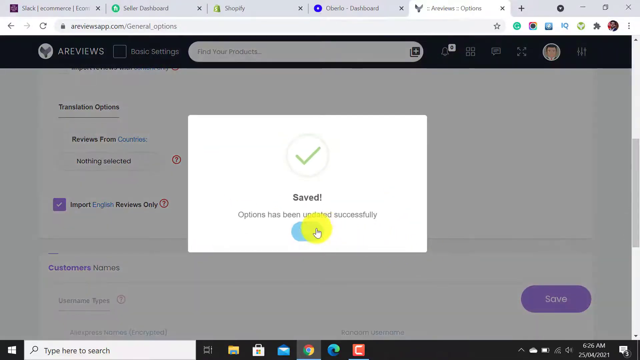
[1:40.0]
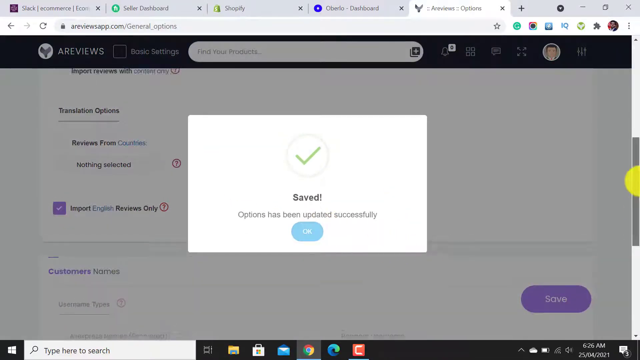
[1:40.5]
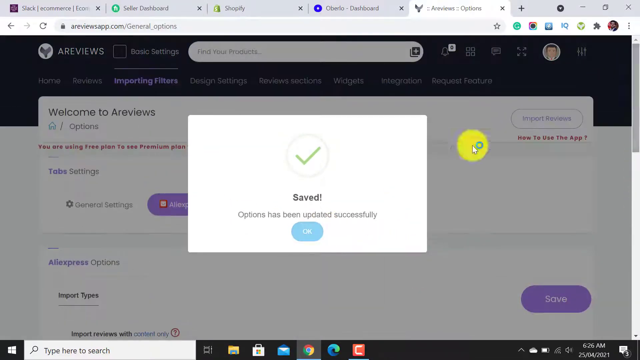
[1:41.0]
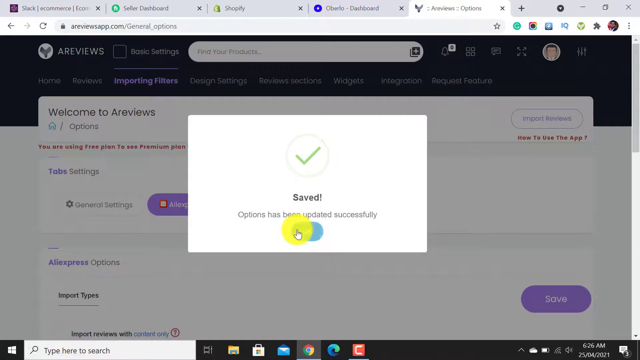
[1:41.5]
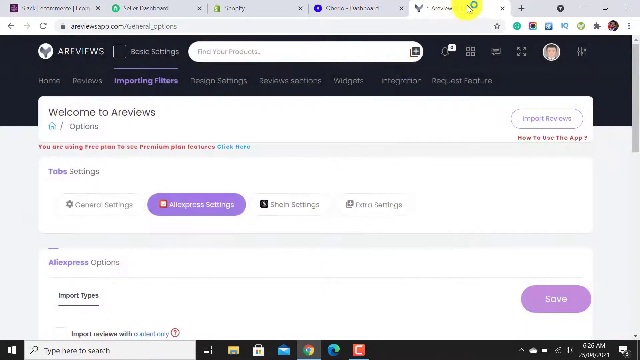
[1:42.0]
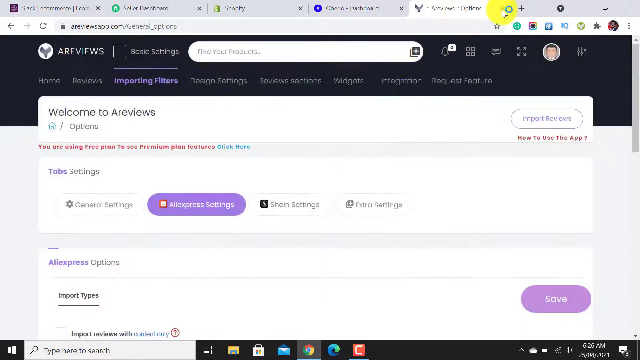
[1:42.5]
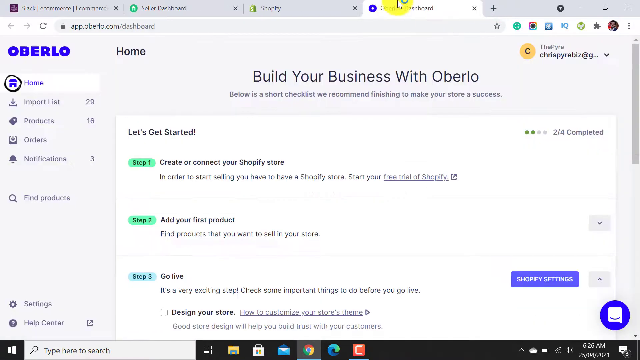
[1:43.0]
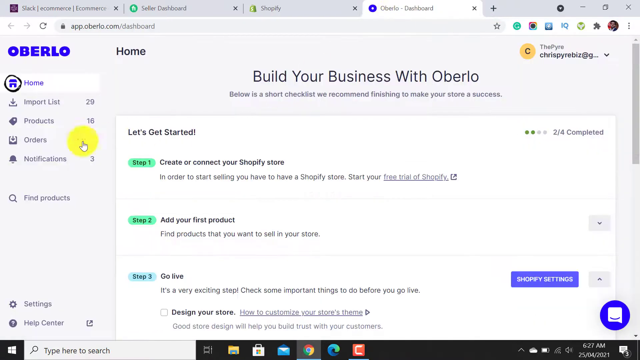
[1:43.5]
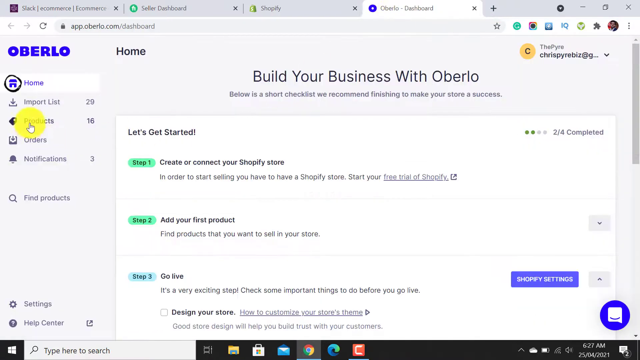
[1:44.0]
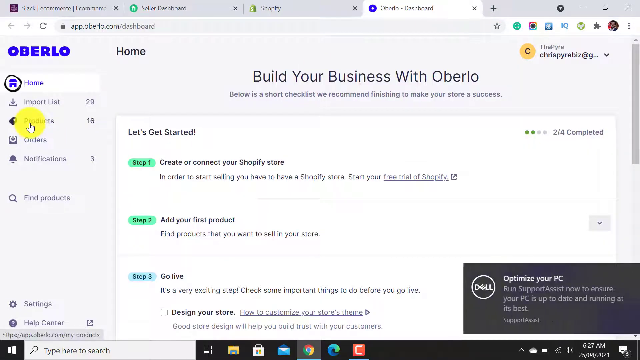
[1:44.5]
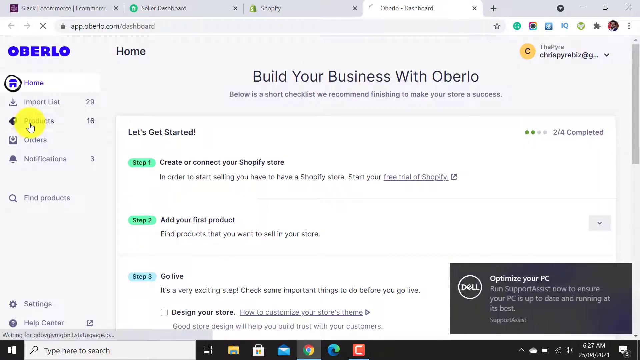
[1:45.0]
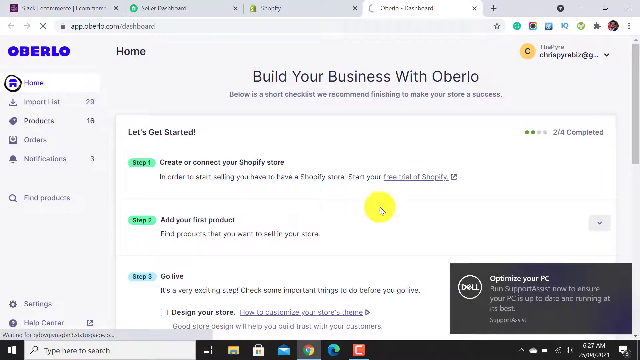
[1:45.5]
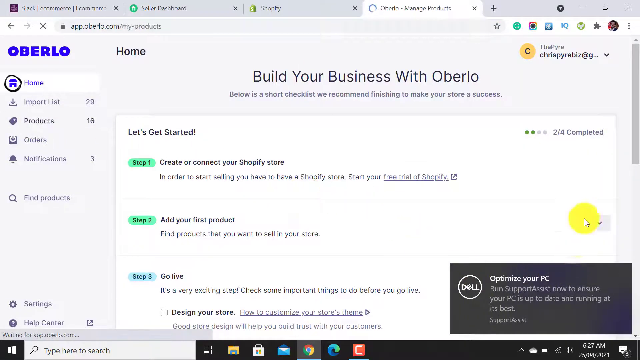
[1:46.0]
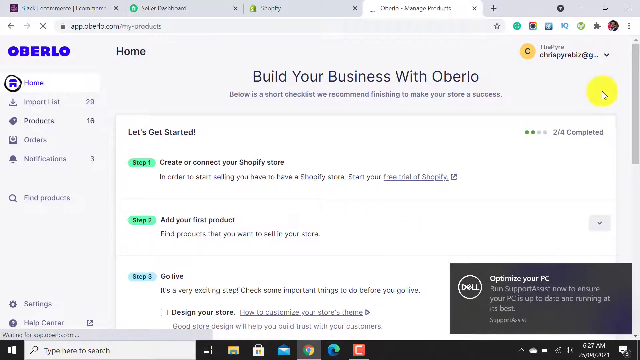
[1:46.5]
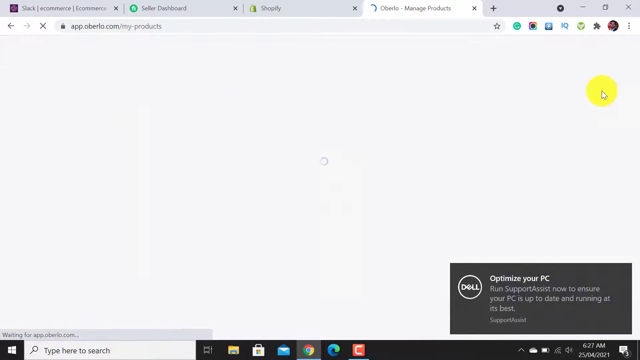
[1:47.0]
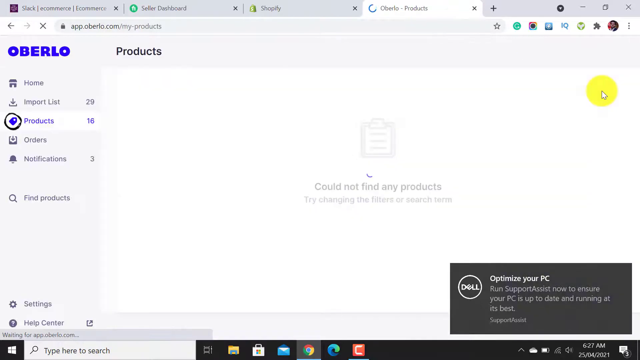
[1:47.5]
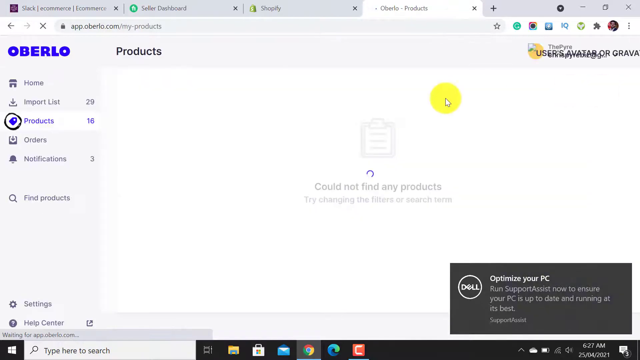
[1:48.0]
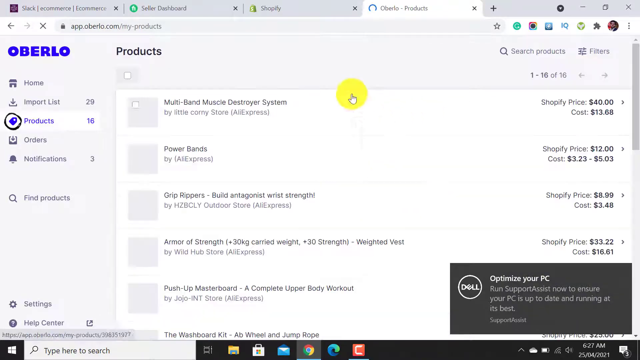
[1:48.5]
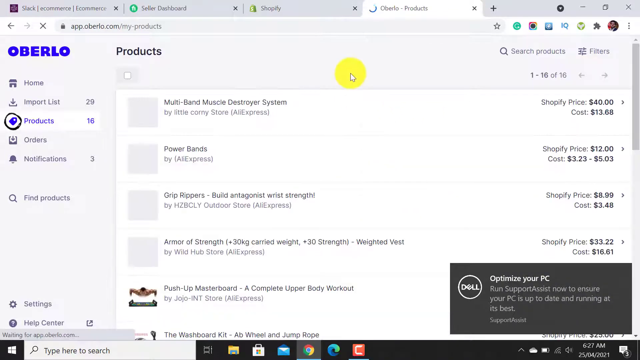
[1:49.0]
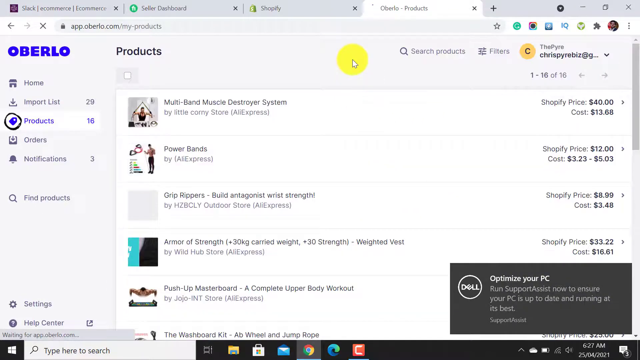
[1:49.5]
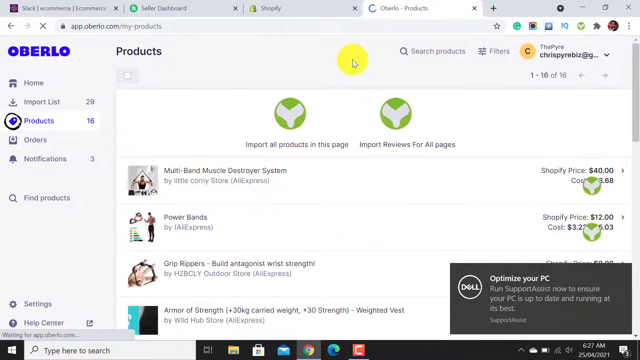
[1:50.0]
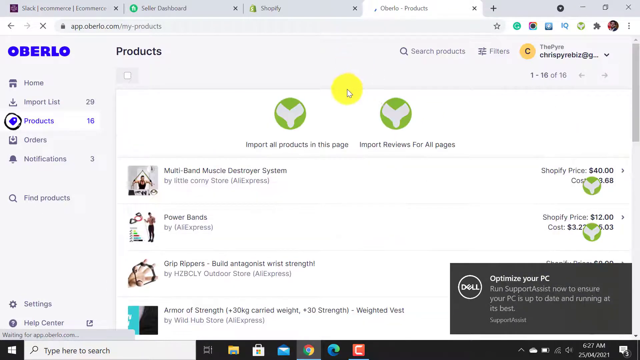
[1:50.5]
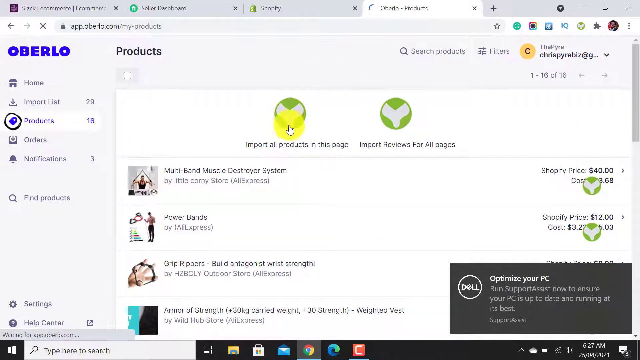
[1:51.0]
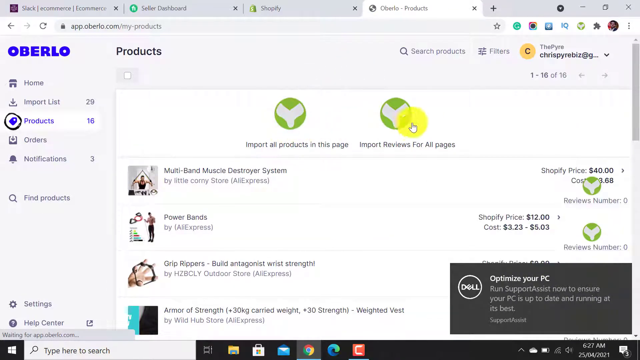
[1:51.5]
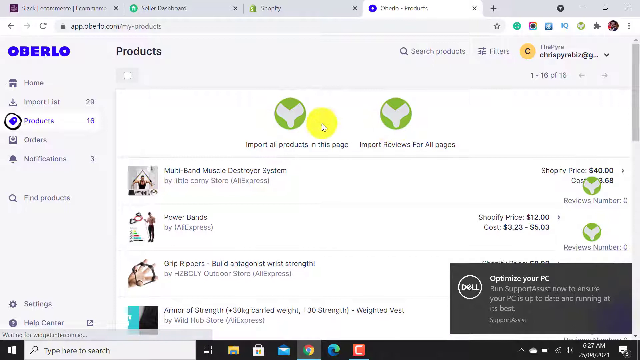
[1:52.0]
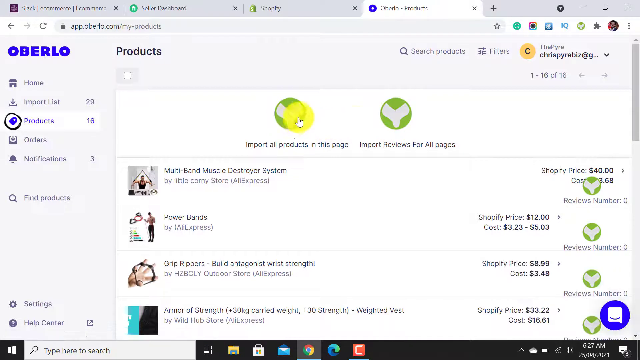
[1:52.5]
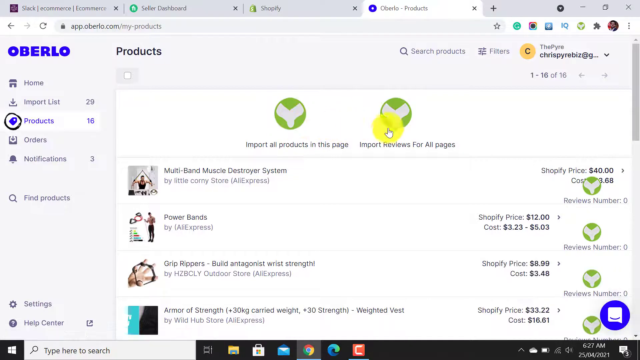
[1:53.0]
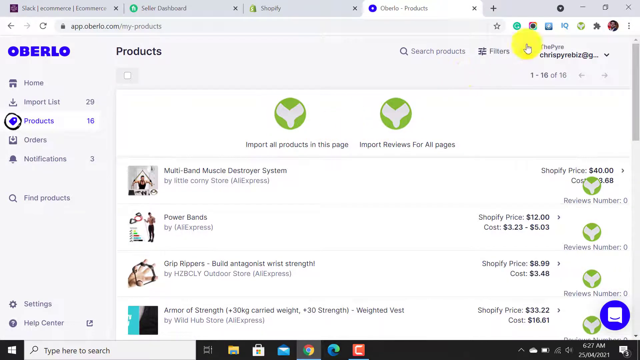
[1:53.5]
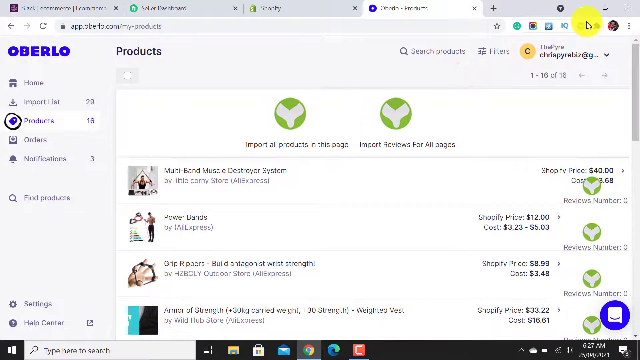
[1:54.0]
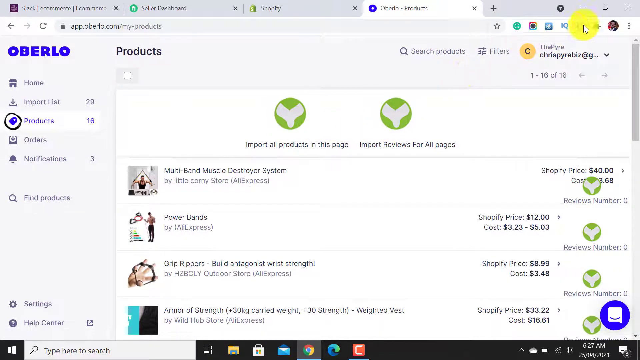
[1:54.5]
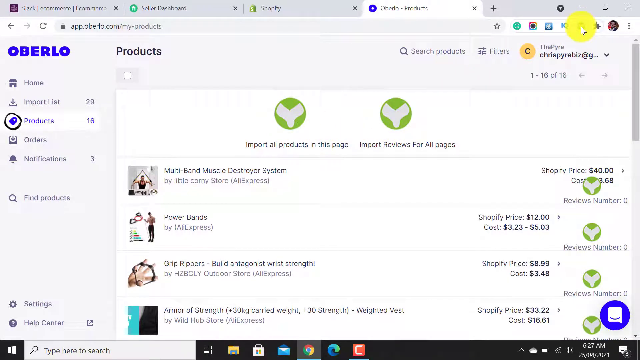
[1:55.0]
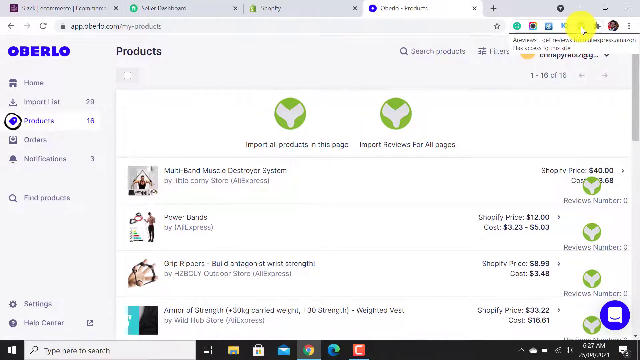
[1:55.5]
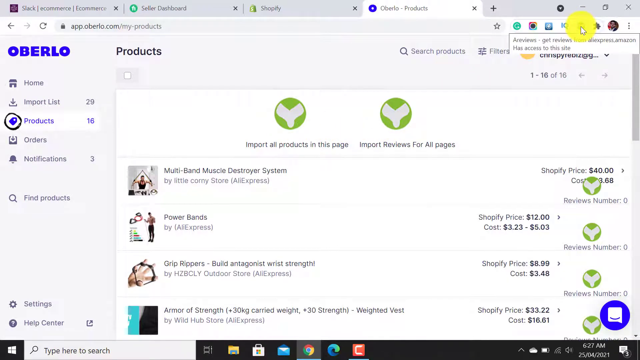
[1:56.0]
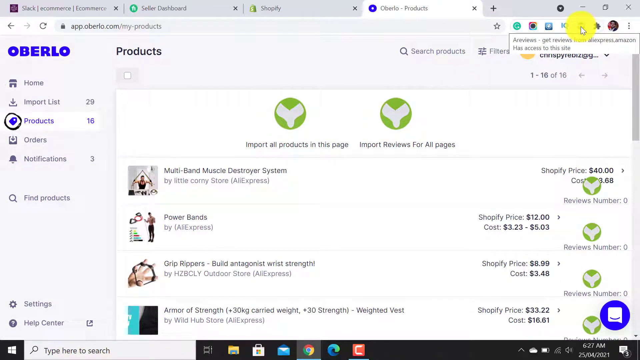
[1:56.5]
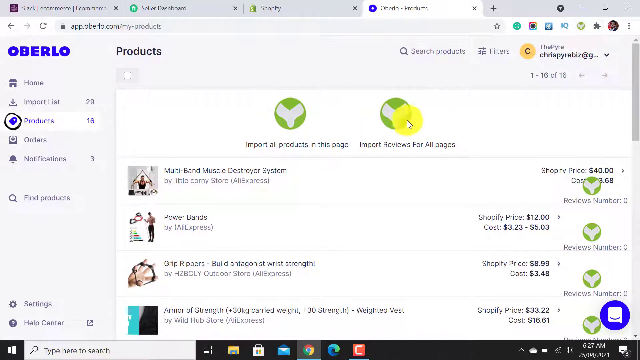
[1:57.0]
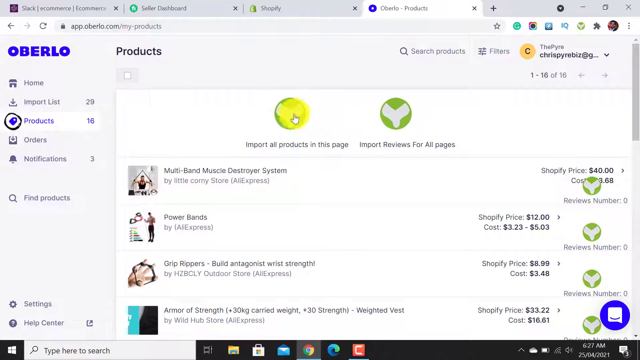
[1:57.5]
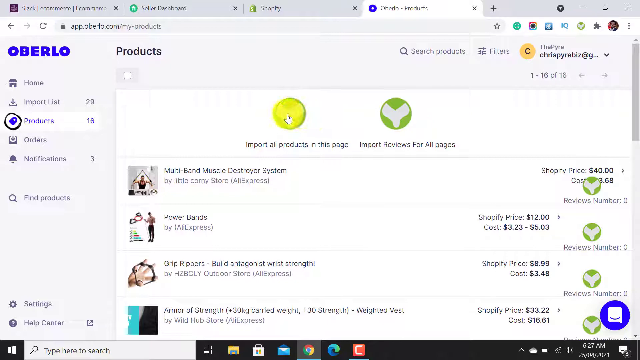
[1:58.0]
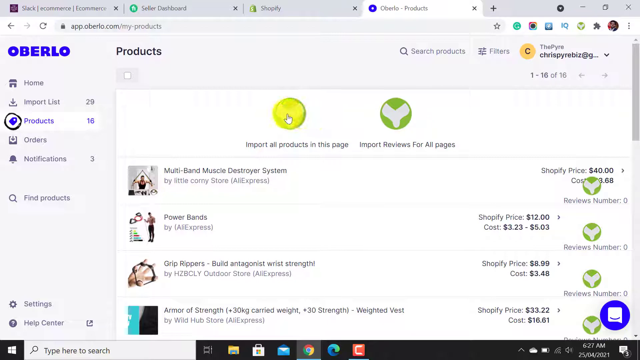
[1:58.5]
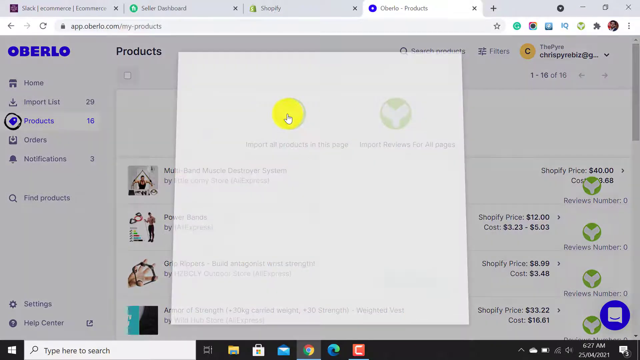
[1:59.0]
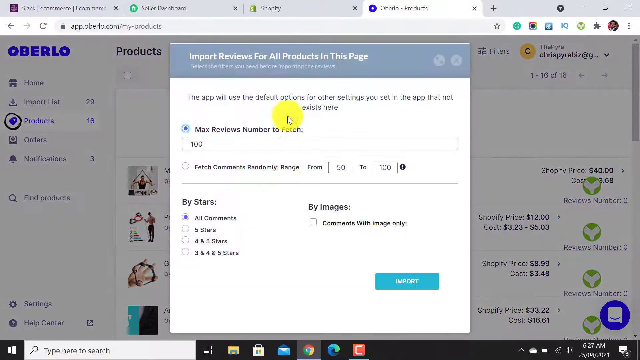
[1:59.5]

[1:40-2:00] After the confirmation for importing English reviews only, the tab is closed and the user goes to an open tab called "Oberlo dashboard," which shows "Build your business with Oberlo" and "Let's get started." The user goes to products, reaching an import products page listing multiband, muscle destroyer system, power bands, grip rippers, build antagonist and wrist strength, with options to "import all products in this page" and "import reviews for this page." The user clicks the pinned A-Reviews extension, which shows "Get reviews from AliExpress.Amazon," then goes back and chooses to import reviews.